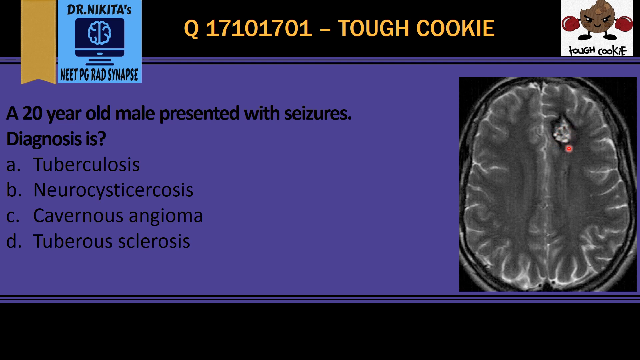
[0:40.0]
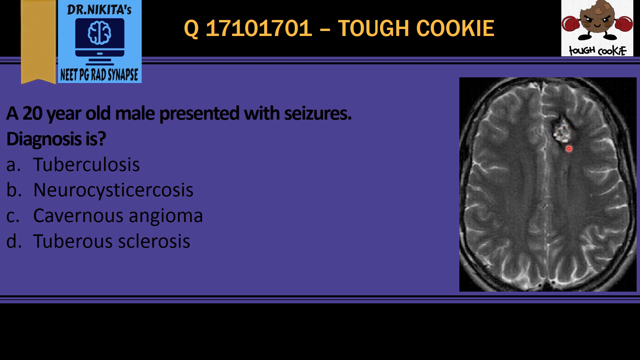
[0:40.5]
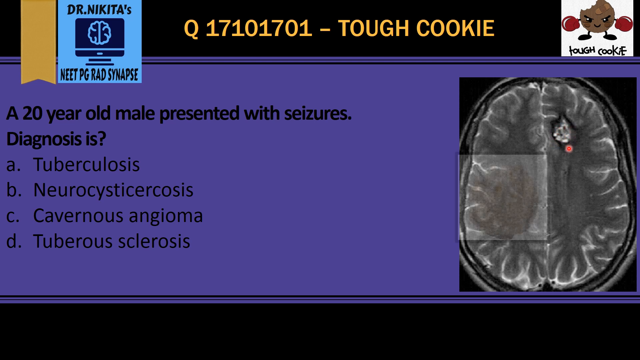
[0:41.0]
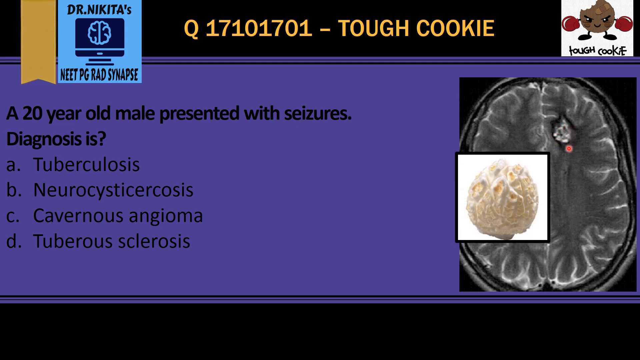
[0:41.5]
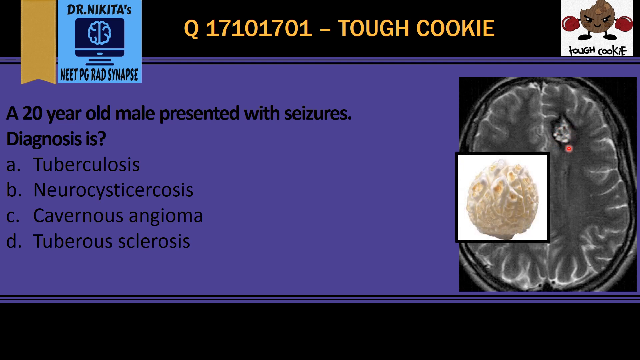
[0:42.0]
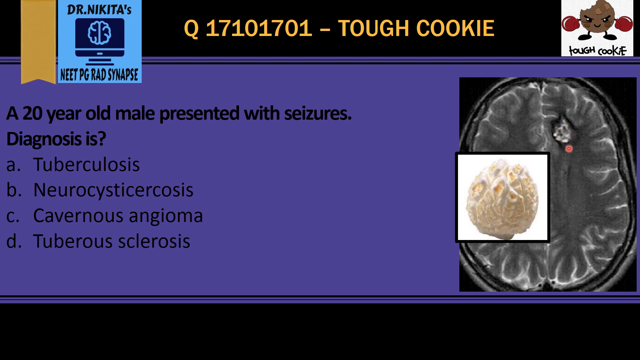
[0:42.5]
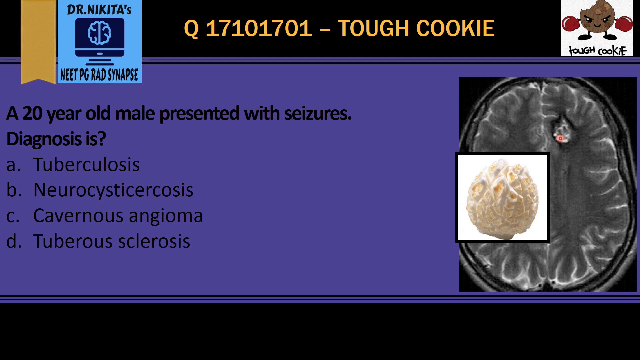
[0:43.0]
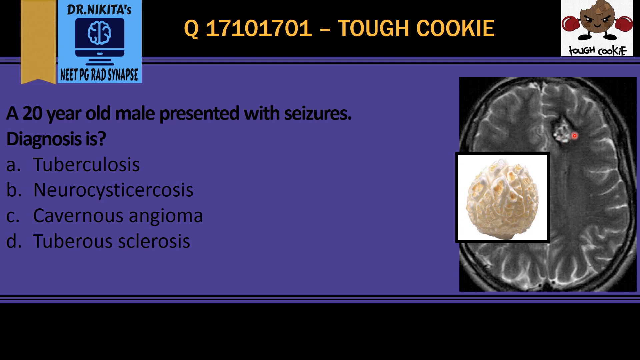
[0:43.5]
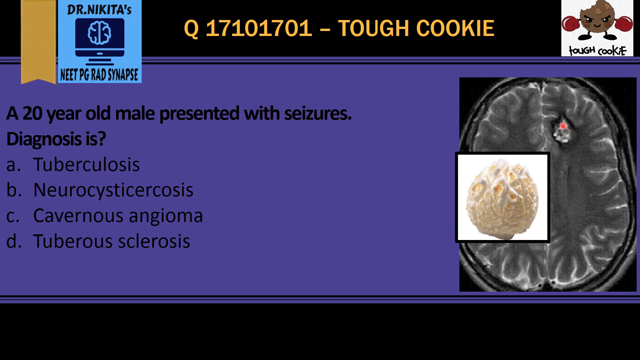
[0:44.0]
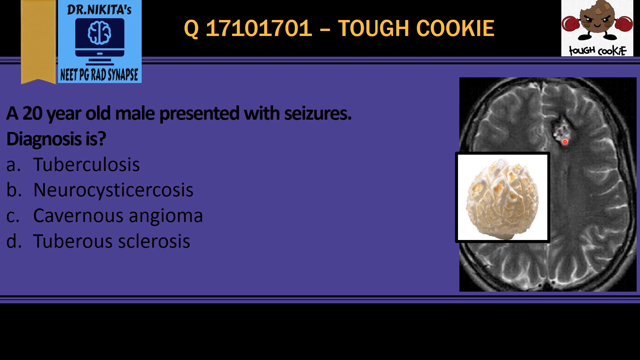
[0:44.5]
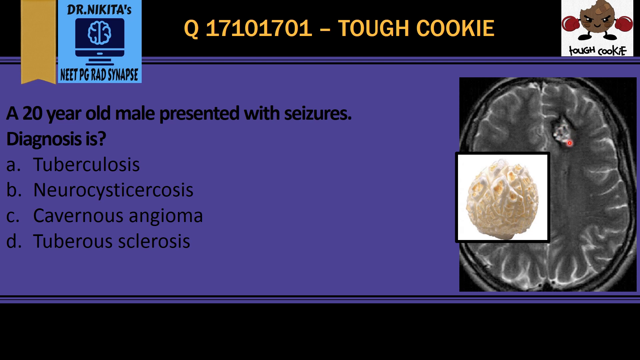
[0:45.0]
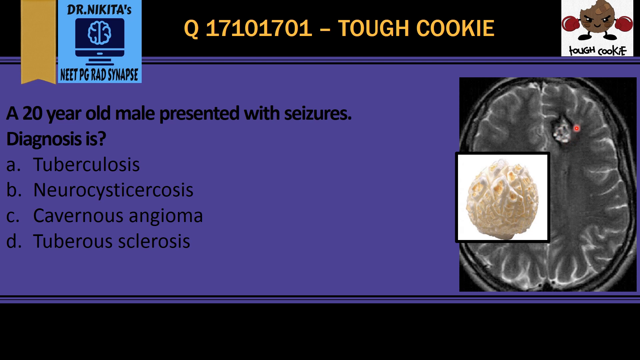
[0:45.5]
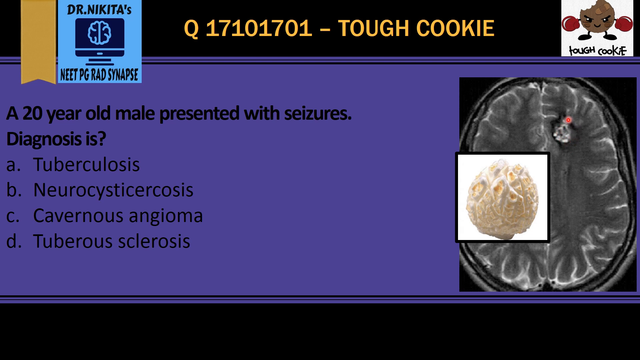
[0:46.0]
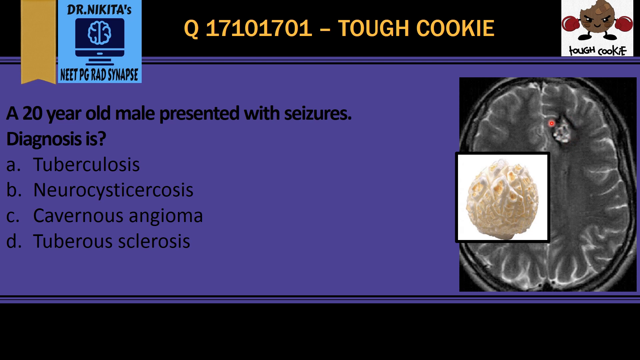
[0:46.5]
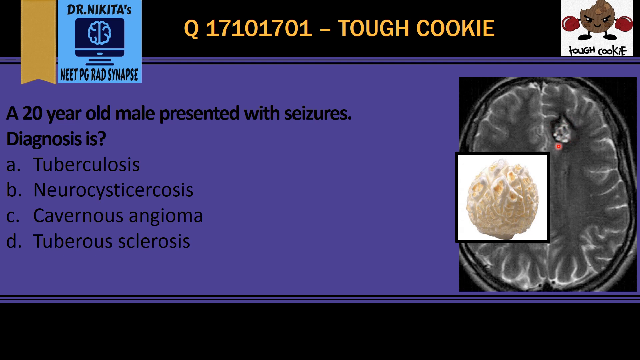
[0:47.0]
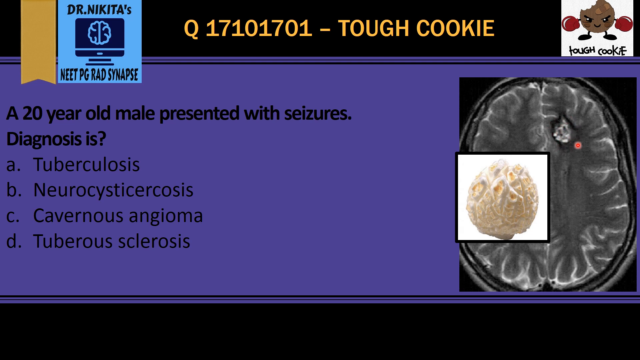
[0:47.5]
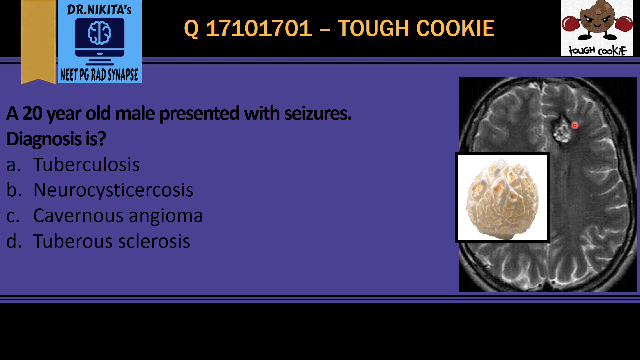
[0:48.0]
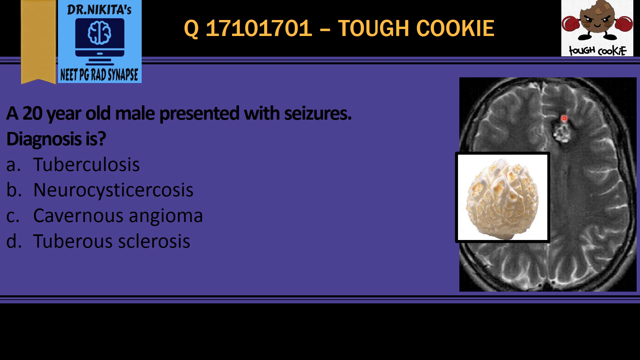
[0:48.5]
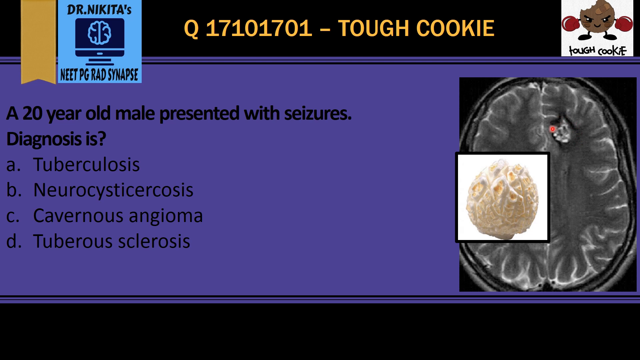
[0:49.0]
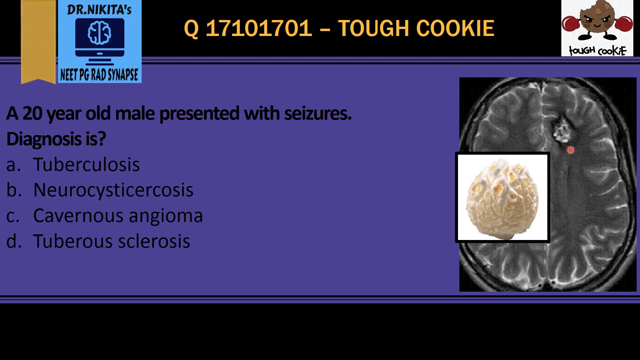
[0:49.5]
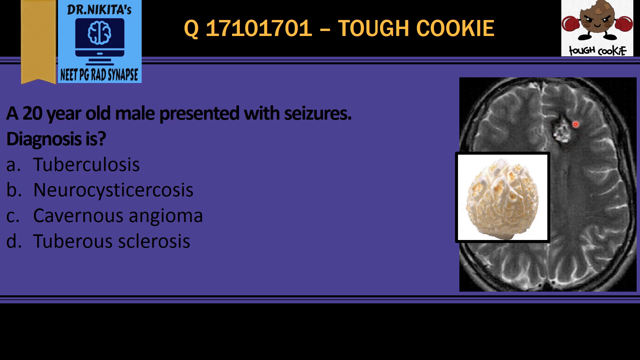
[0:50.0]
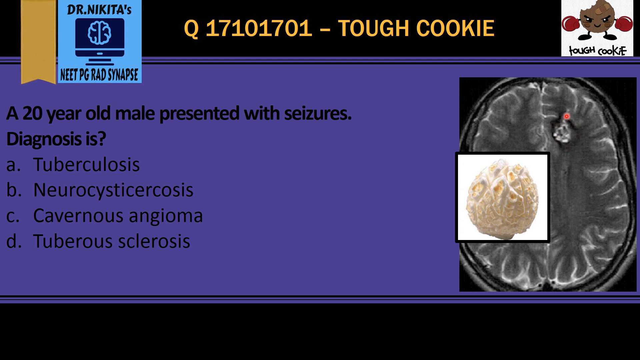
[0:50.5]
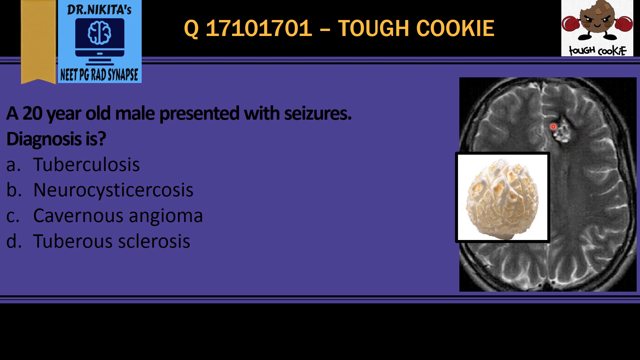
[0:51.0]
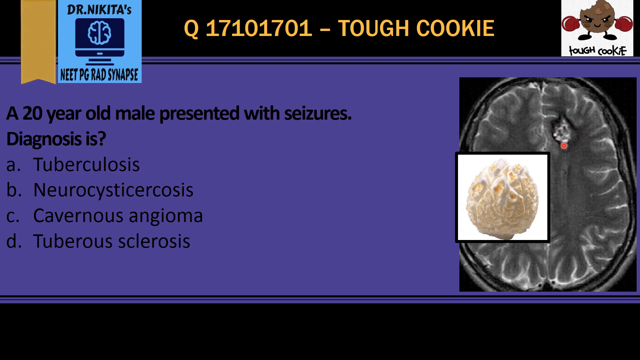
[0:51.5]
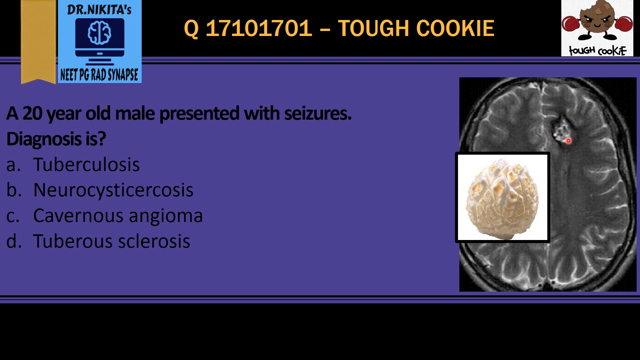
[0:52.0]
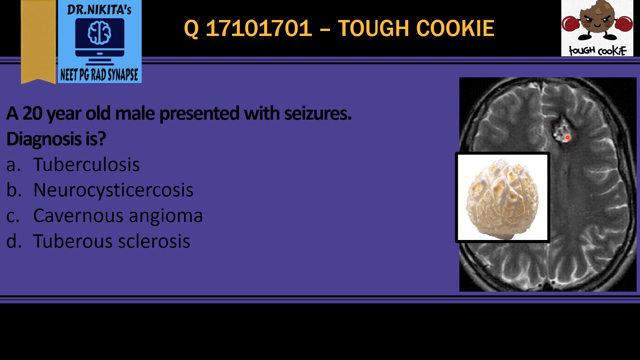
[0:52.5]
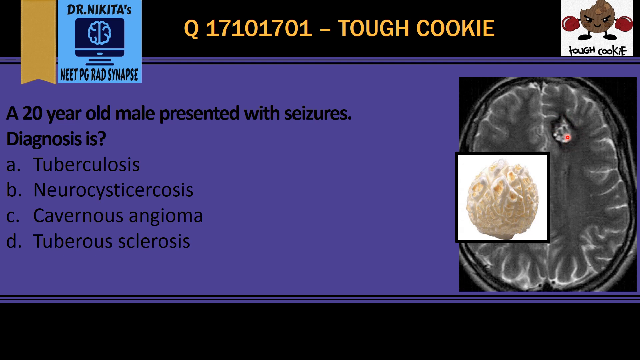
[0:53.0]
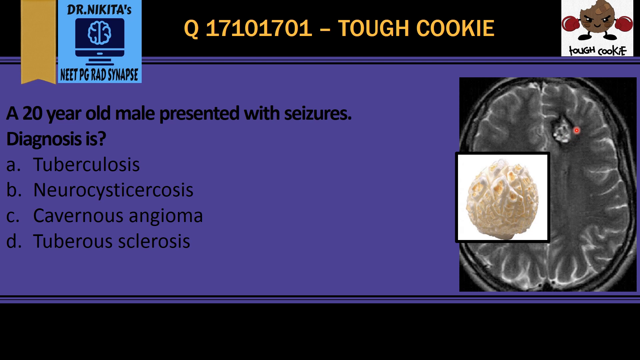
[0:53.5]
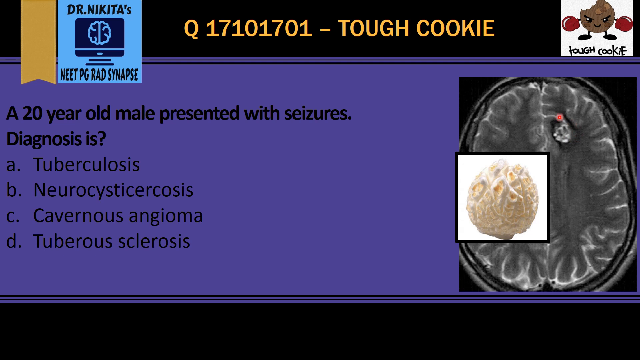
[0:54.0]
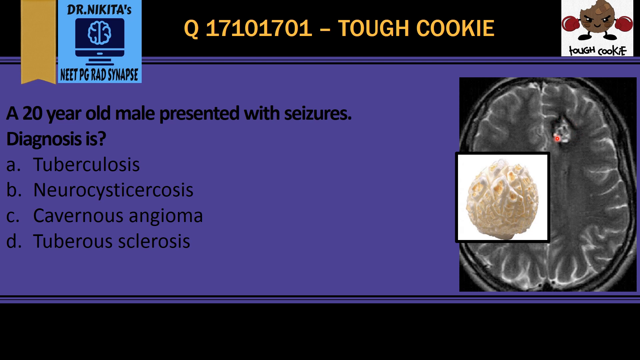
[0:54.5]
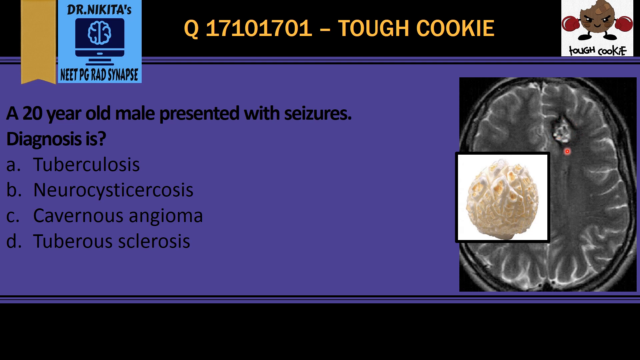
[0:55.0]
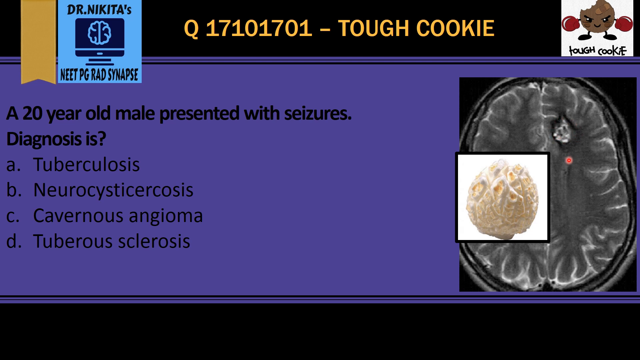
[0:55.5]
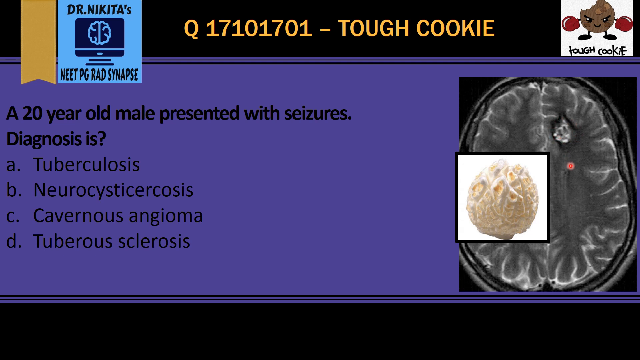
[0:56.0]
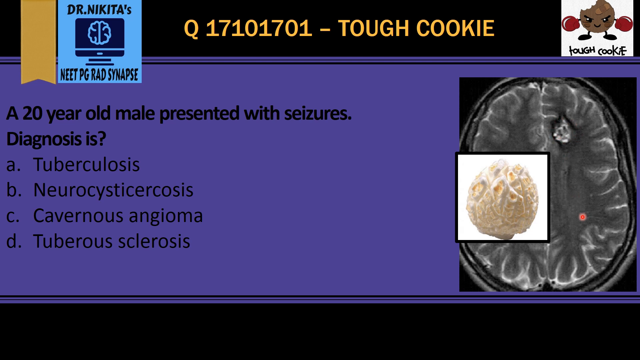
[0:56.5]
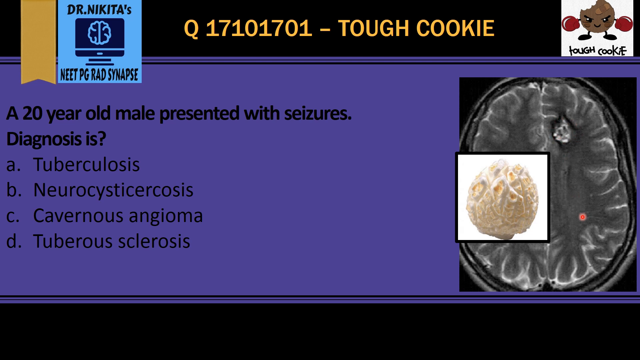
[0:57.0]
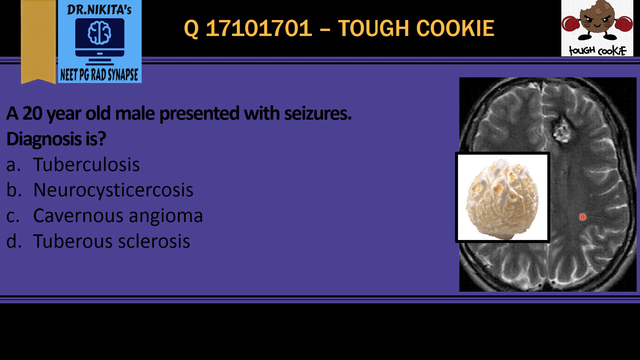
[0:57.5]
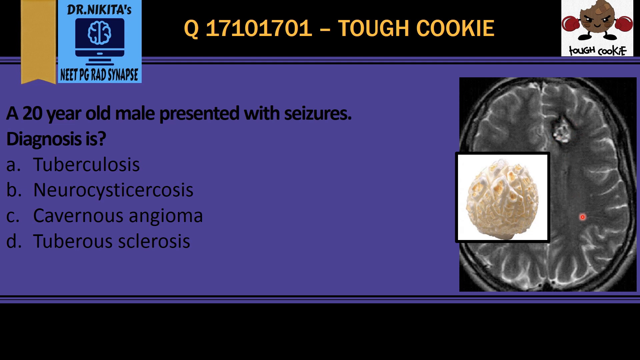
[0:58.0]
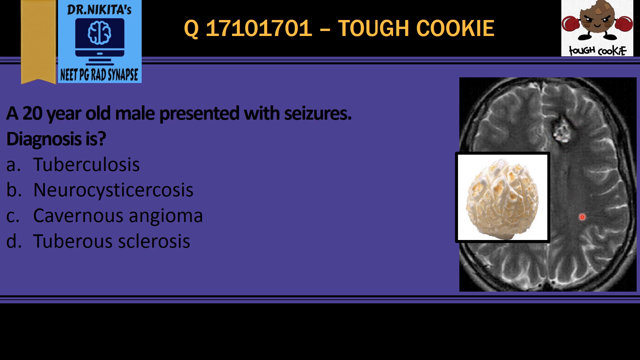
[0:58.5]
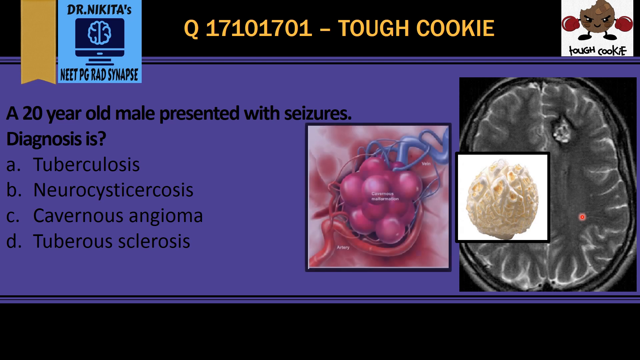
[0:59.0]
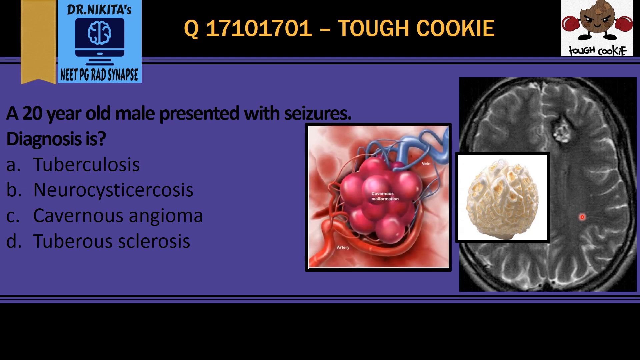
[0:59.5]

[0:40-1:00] While the cursor points to the thing inside the brain, an image overlays the MRI. It is encapsulated in a white background with a black outline, and it seems to show a white, spherical, rigid, rugged ball of something that is very porous, with lots of bumps and holes. The presenter seems to be treating it as what is inside the brain, and the cursor keeps circling around it anticlockwise. Another picture then appears to the left of it: a graphic of something connected by veins, seemingly made up of multiple red balls clustered together, with red and blue lines; the red lines represent the arteries and the blue lines represent the veins.